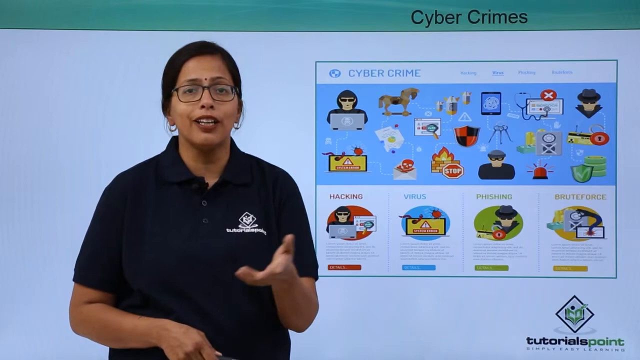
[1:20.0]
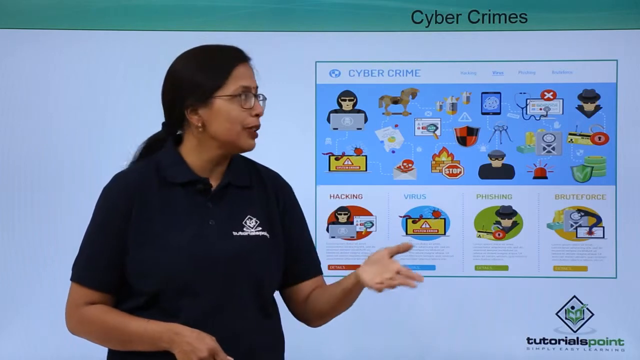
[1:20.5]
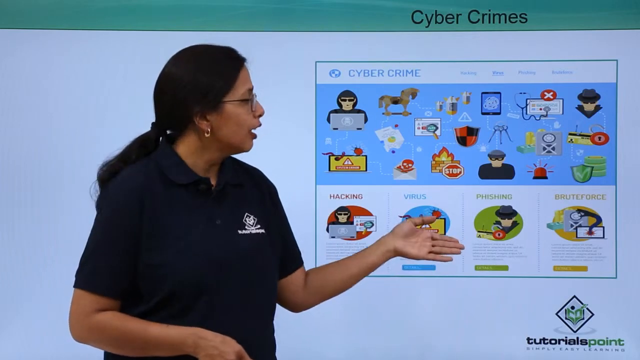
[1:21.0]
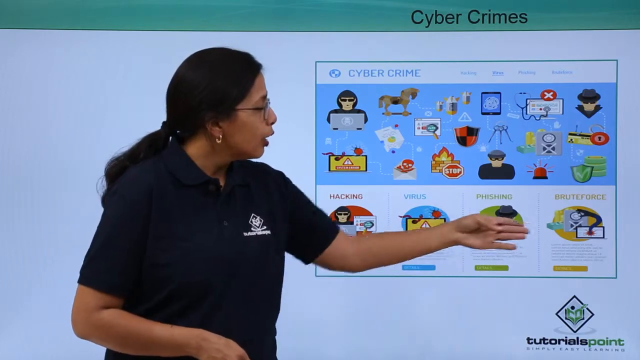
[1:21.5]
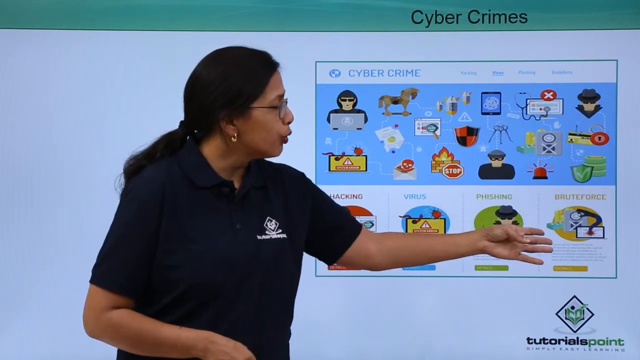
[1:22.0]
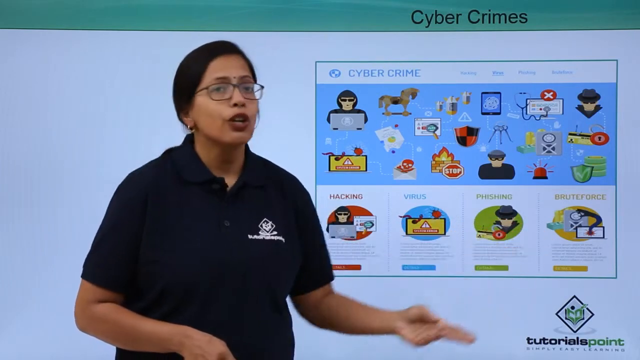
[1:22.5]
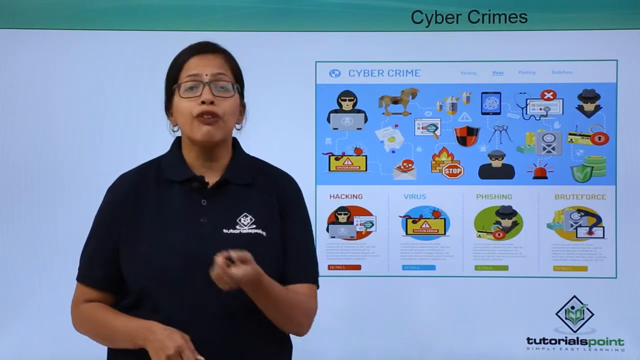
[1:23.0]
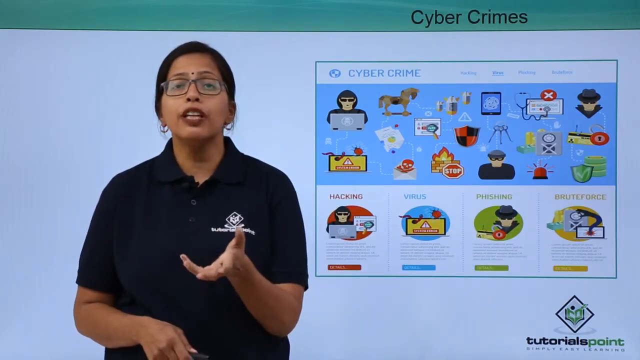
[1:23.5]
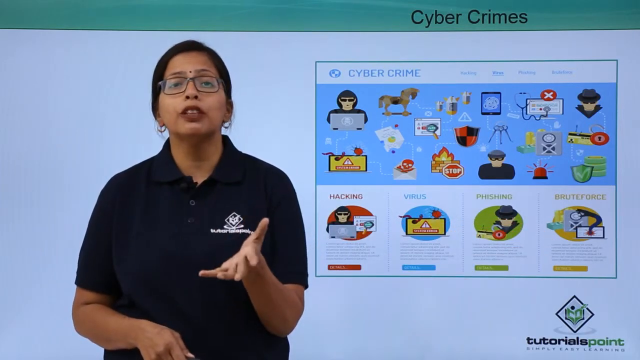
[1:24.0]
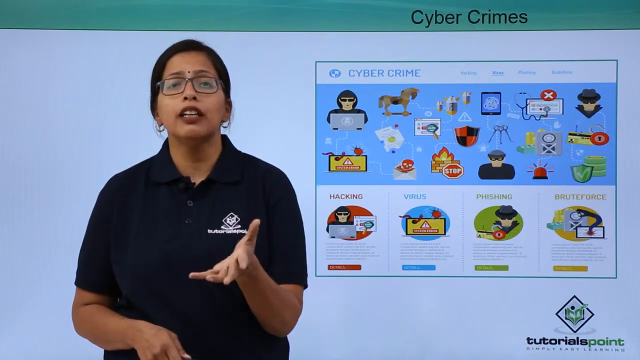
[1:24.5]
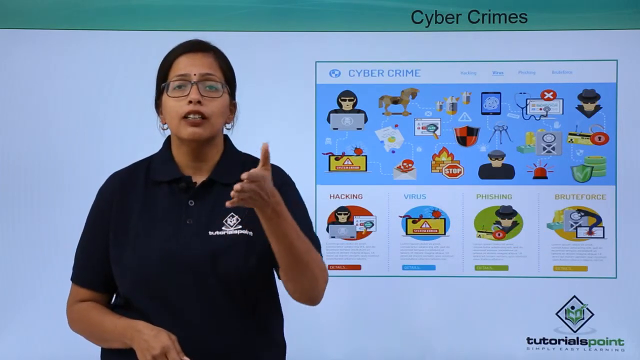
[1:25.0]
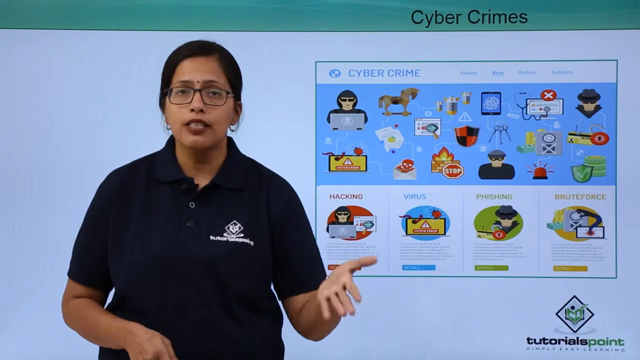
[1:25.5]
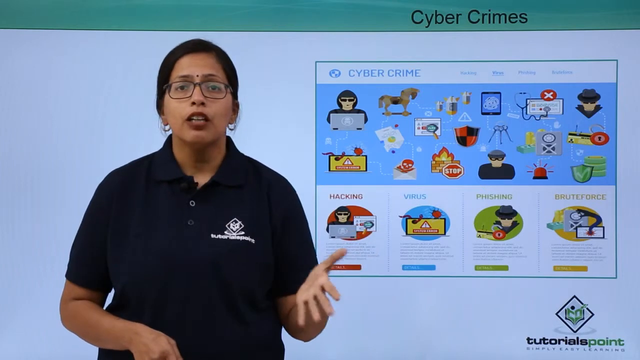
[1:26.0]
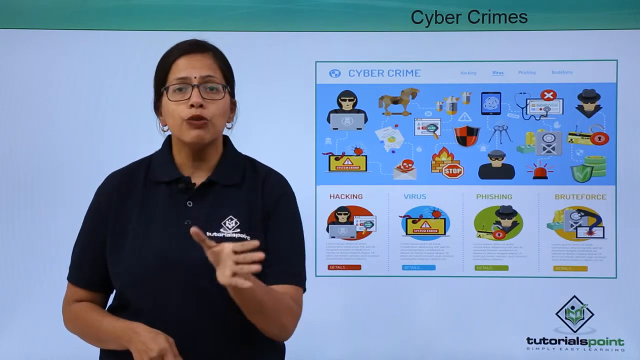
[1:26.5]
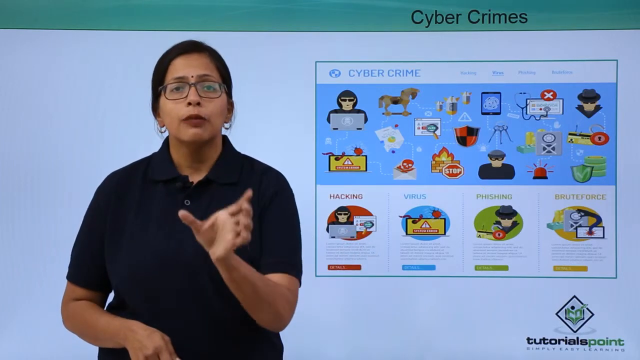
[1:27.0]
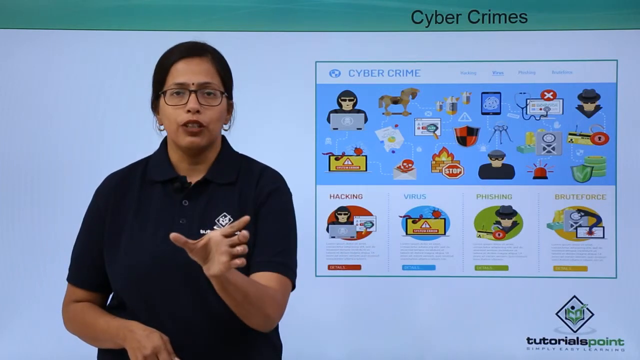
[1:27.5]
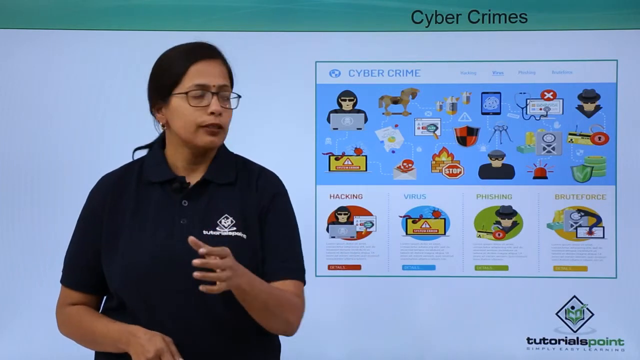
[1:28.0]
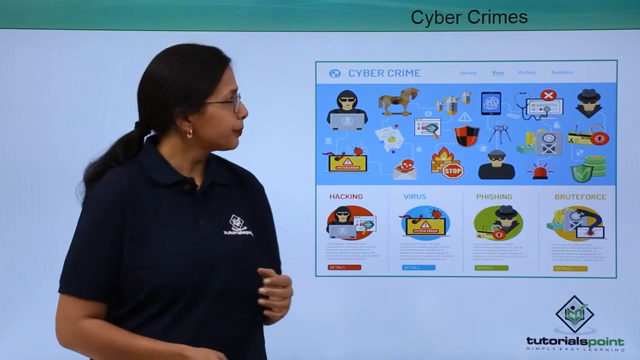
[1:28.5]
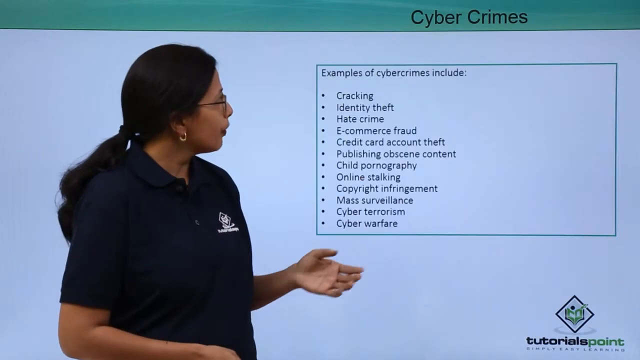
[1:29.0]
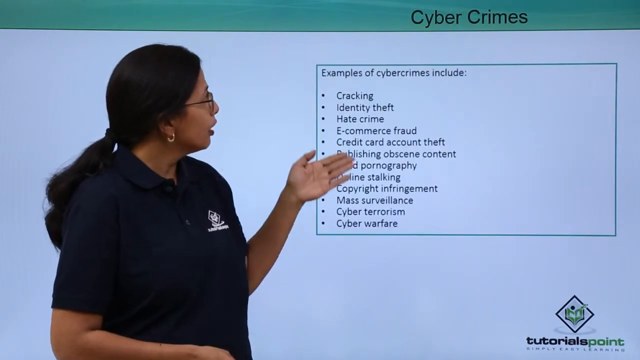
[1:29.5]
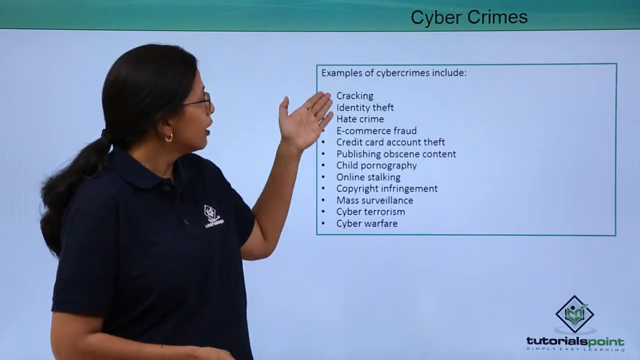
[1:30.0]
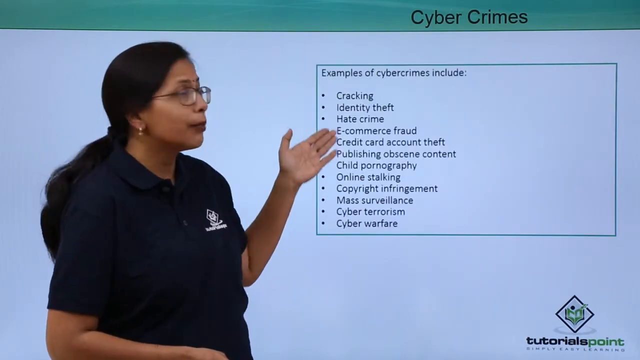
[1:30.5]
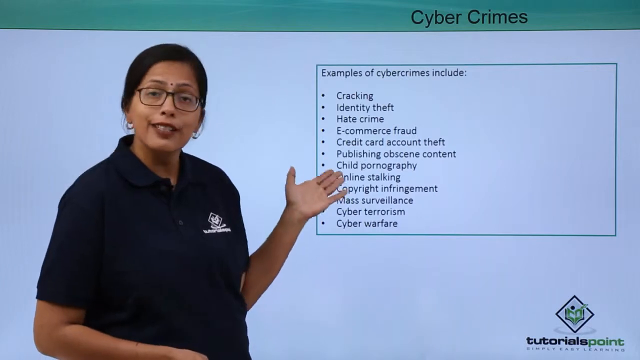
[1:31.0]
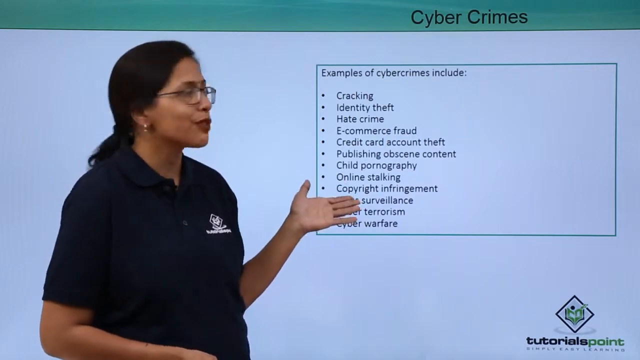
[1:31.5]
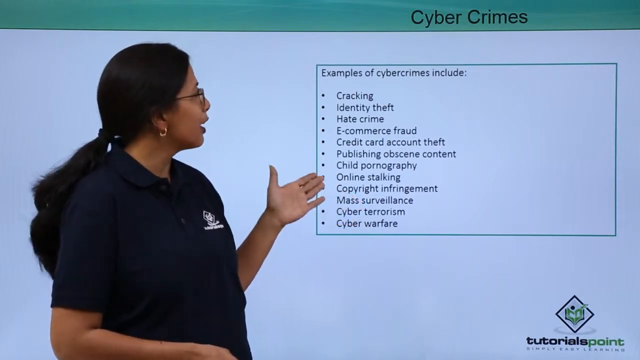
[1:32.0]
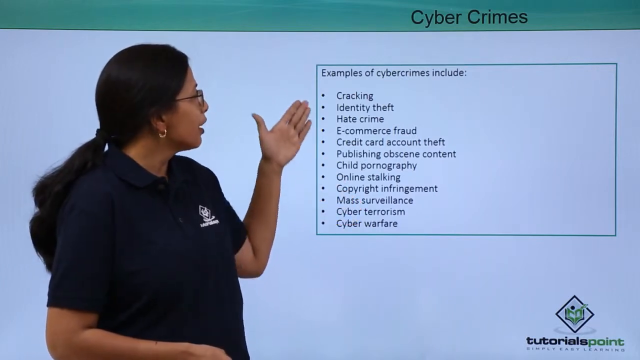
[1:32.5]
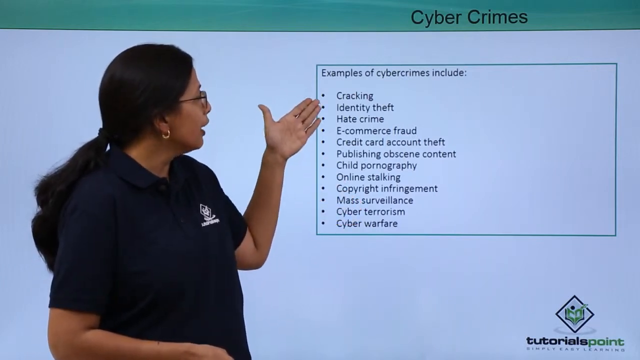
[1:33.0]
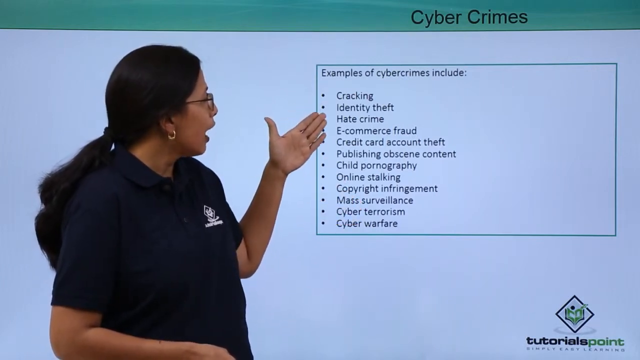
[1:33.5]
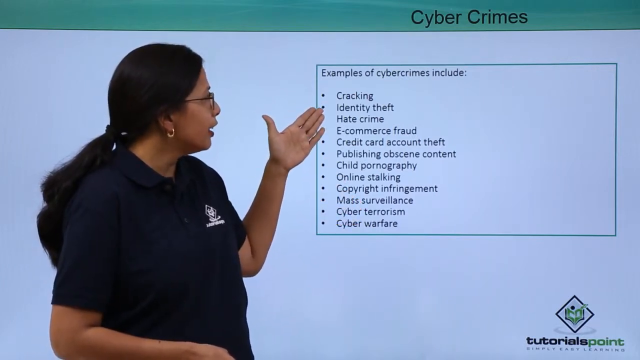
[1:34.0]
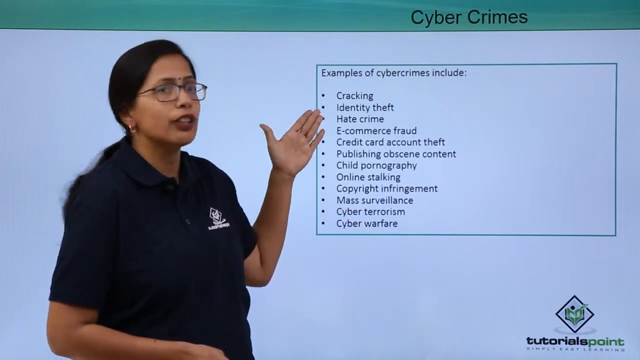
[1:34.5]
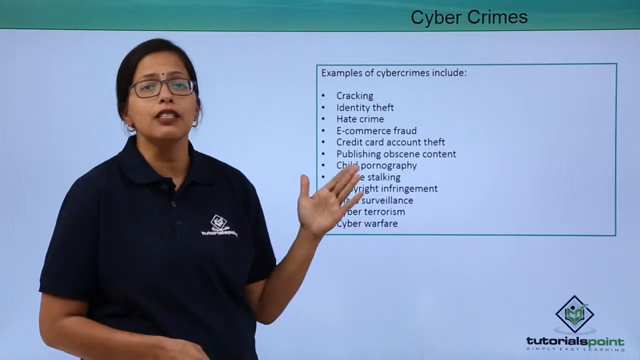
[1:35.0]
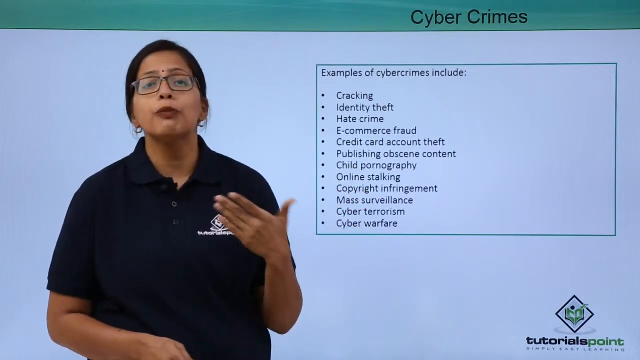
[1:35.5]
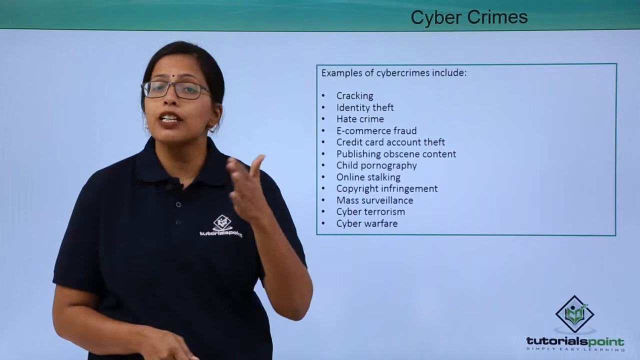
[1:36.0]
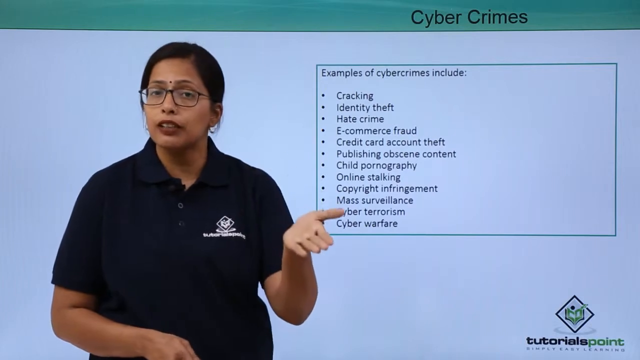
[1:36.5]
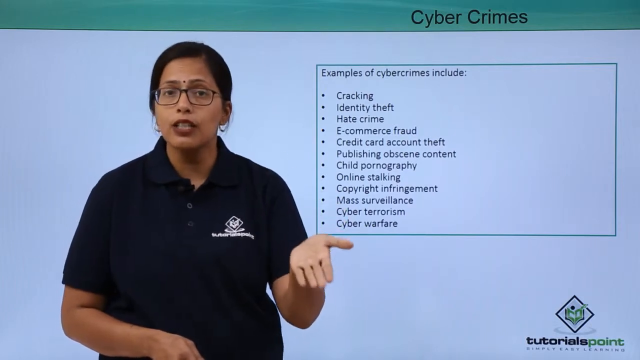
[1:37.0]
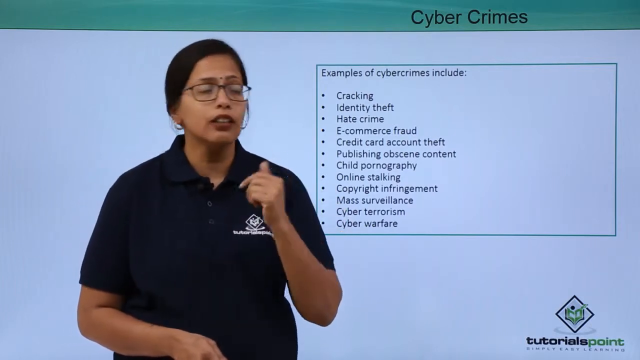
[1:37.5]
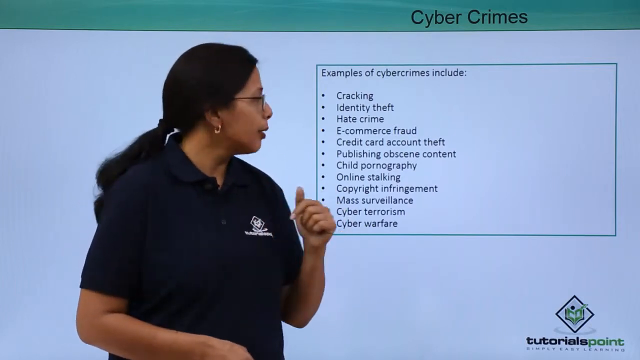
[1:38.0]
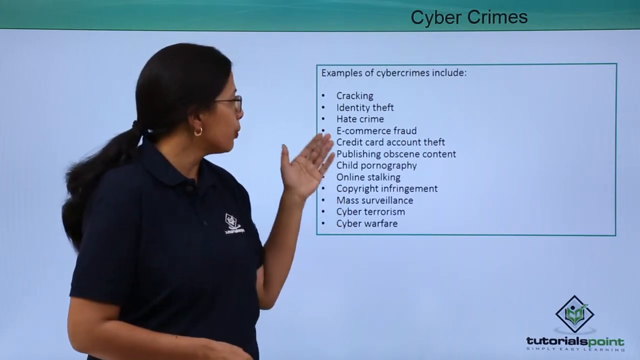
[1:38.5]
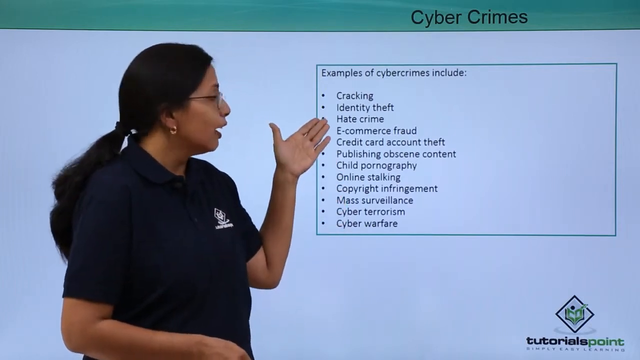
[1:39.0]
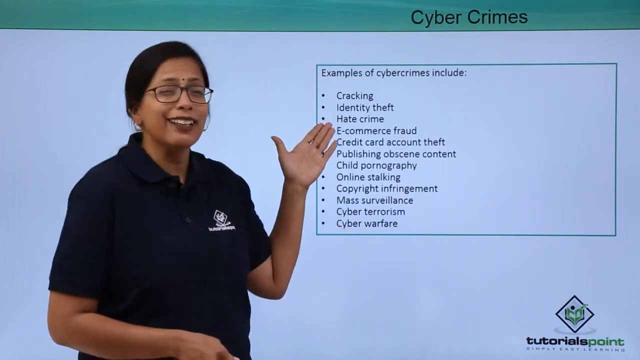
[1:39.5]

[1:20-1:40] The lecturer, a middle-aged Indian lady, teaches about cybercrimes, pointing at the whiteboard at the different slides and the types of cybercrimes. The next slide shows examples of cybercrimes, including cracking, identity theft, hate crime, e-commerce fraud, credit card account theft, publishing obscene content, child pornography, online stalking, copyright infringement, mass surveillance and cyber terrorism. The examples are written in Calibri Body in bullet points, inside a green square with a white filling. The heading "cybercrimes" is written in black with a green background highlighting it. The logo is also present on the screen.